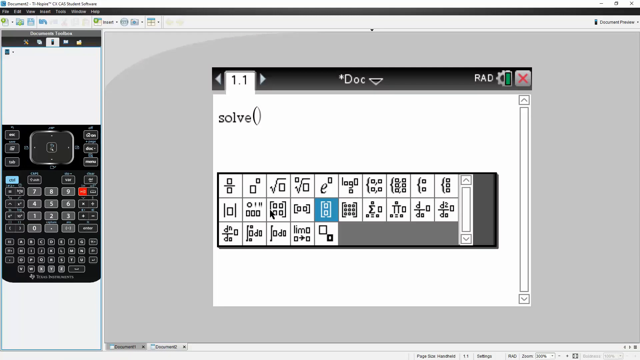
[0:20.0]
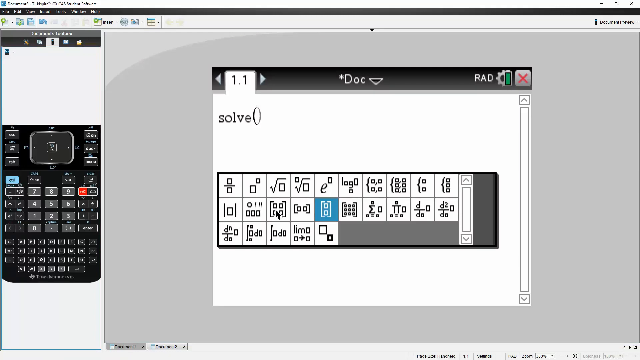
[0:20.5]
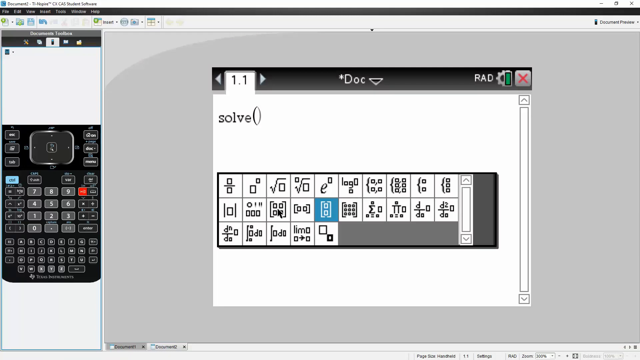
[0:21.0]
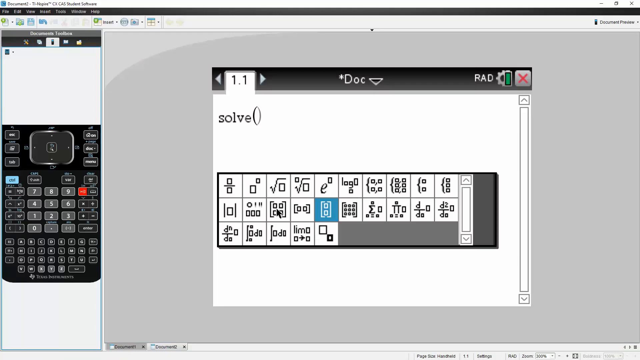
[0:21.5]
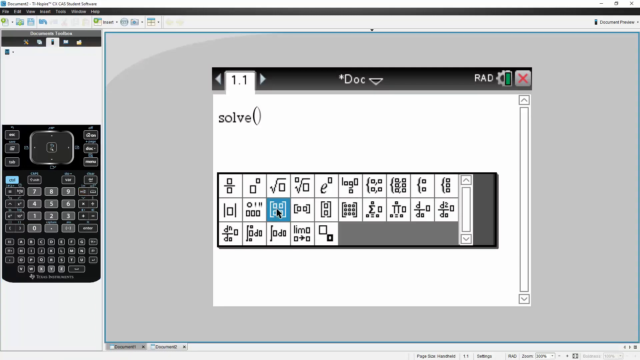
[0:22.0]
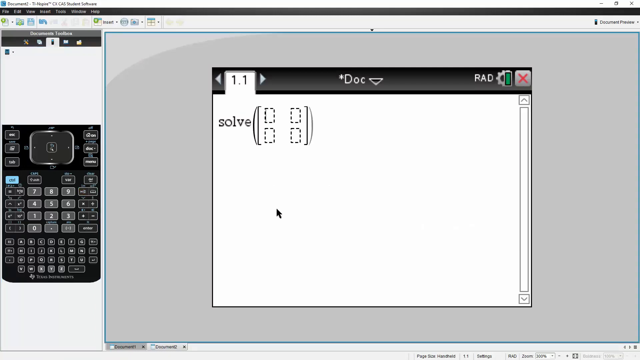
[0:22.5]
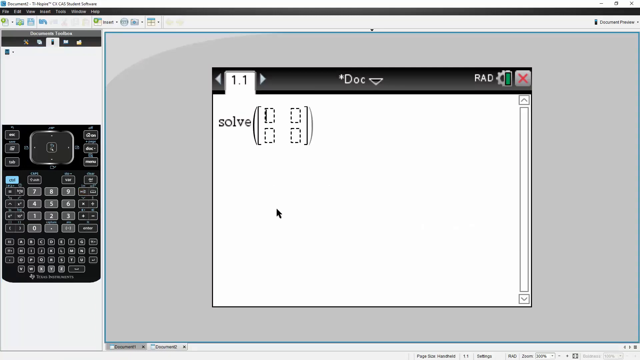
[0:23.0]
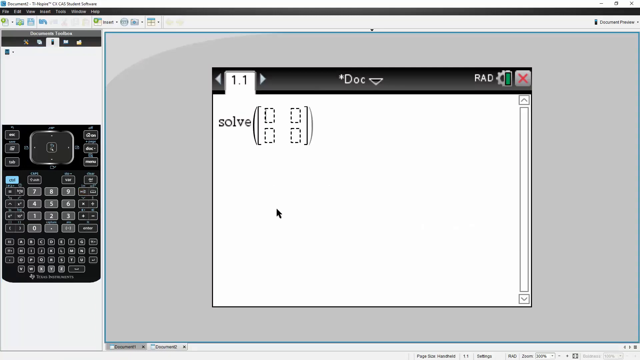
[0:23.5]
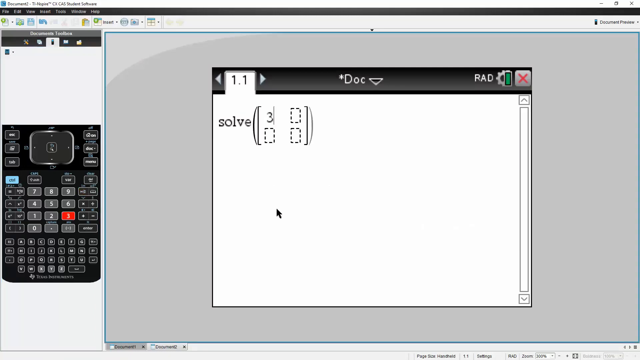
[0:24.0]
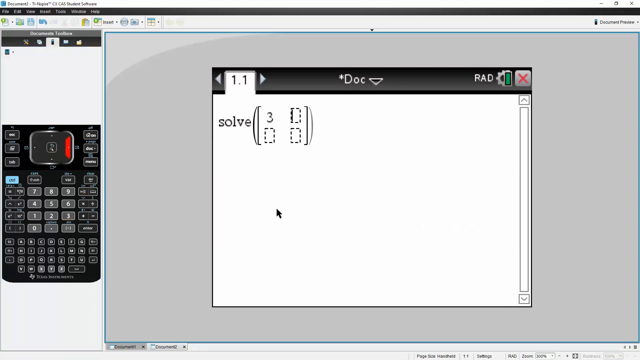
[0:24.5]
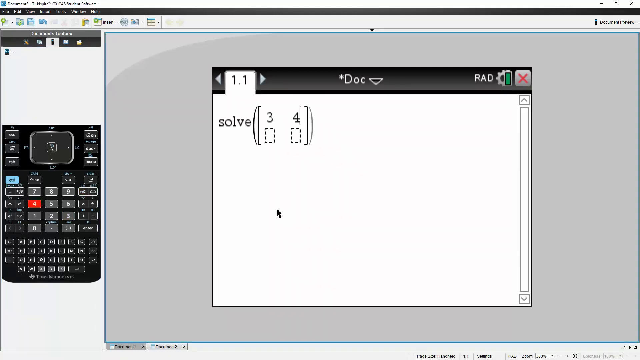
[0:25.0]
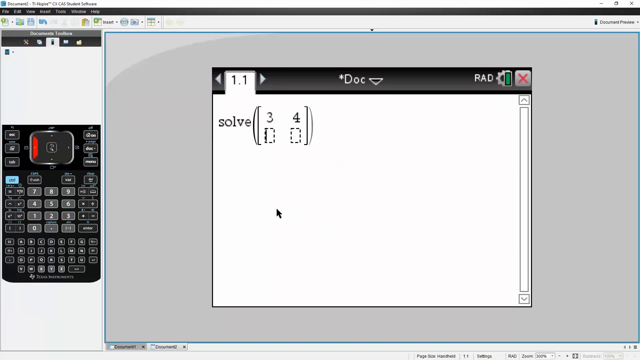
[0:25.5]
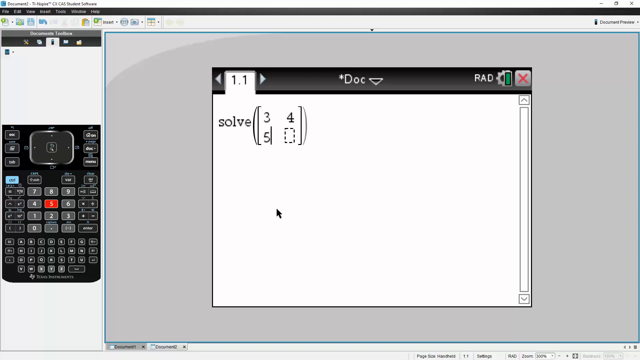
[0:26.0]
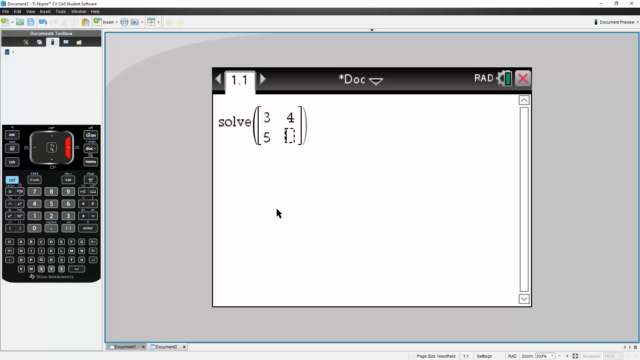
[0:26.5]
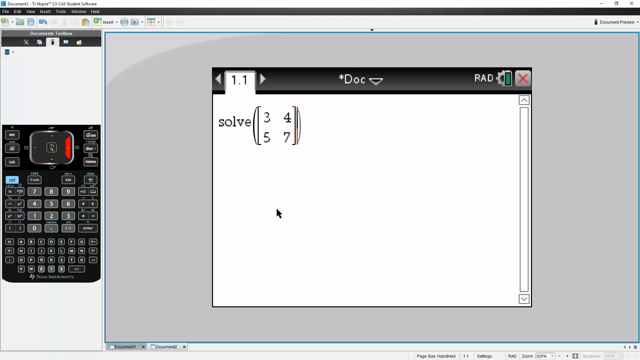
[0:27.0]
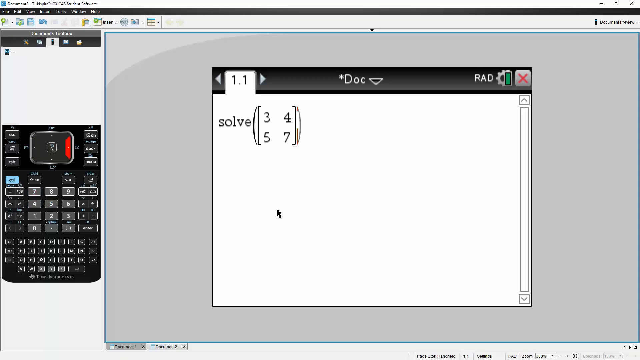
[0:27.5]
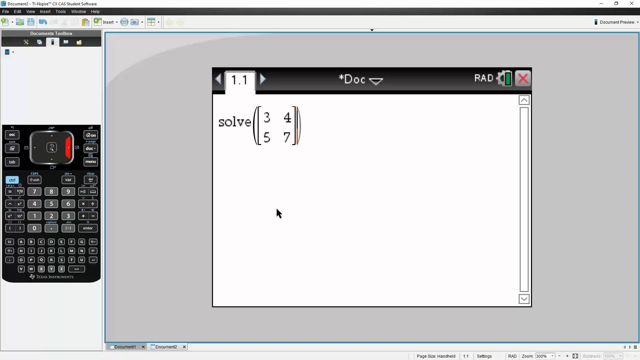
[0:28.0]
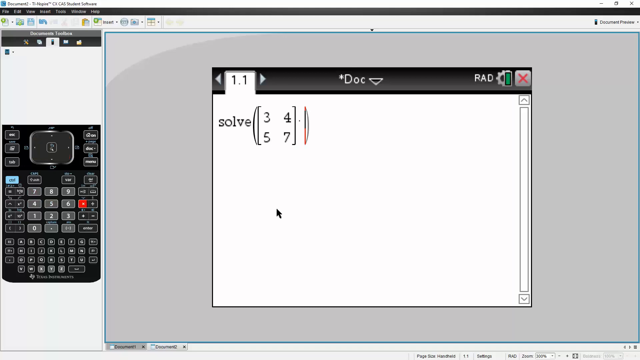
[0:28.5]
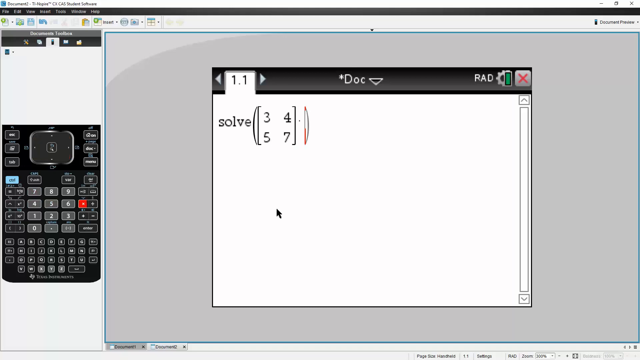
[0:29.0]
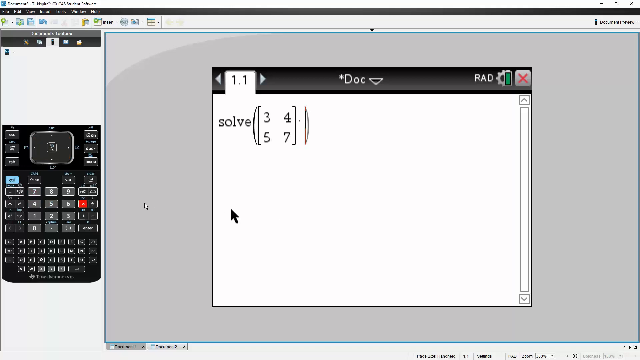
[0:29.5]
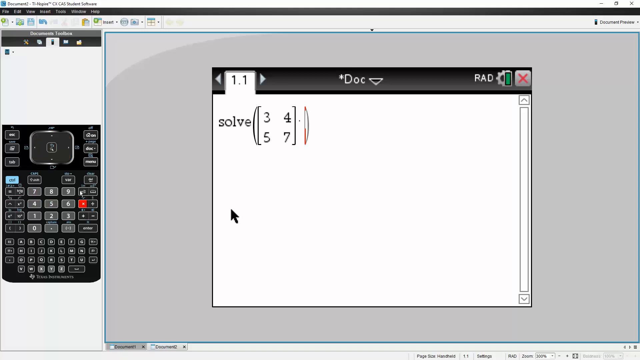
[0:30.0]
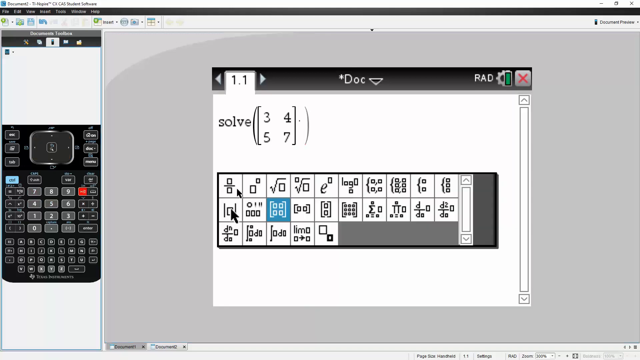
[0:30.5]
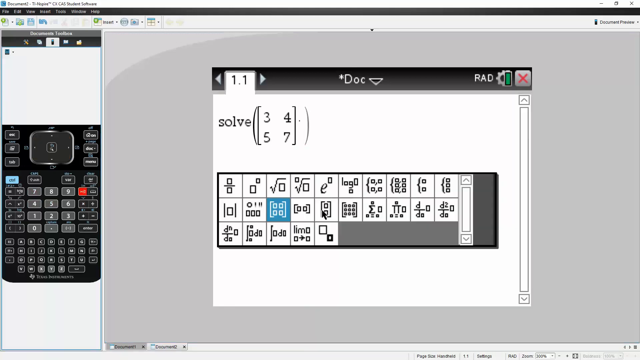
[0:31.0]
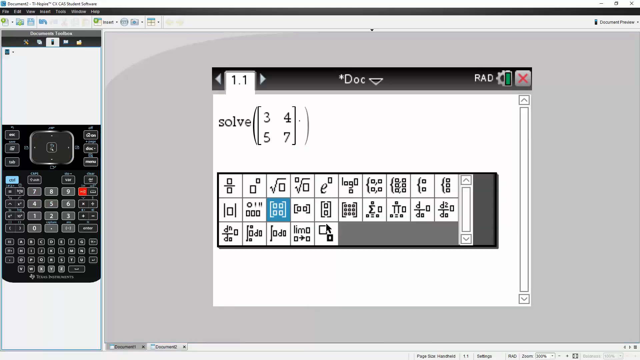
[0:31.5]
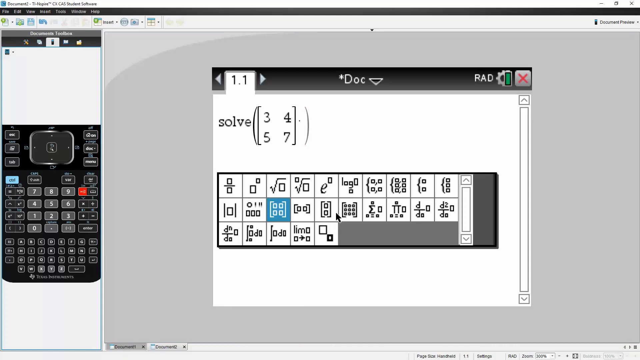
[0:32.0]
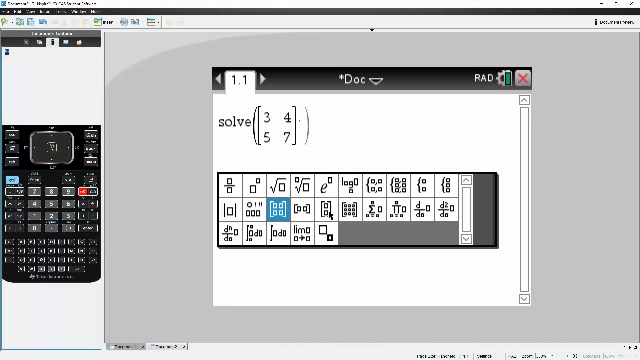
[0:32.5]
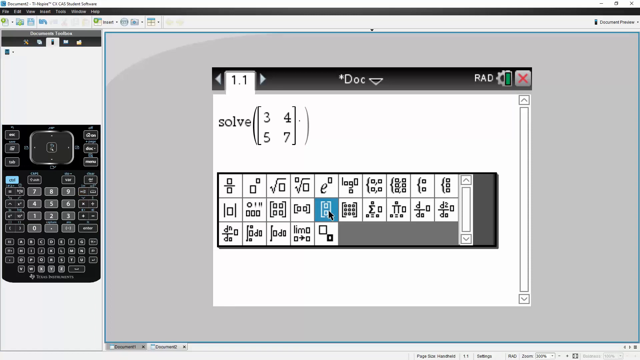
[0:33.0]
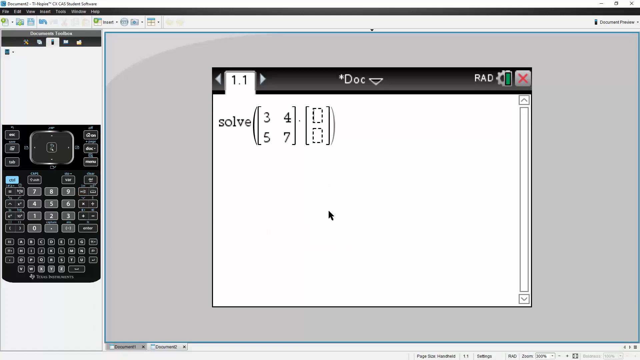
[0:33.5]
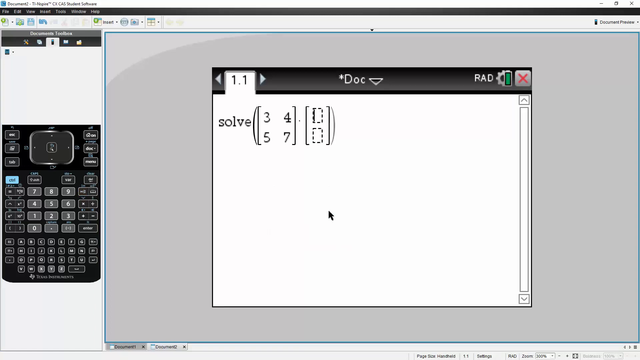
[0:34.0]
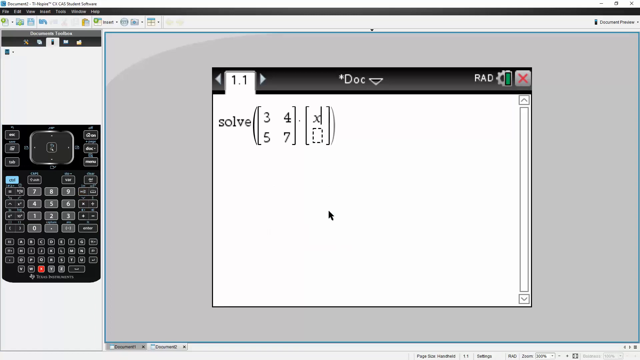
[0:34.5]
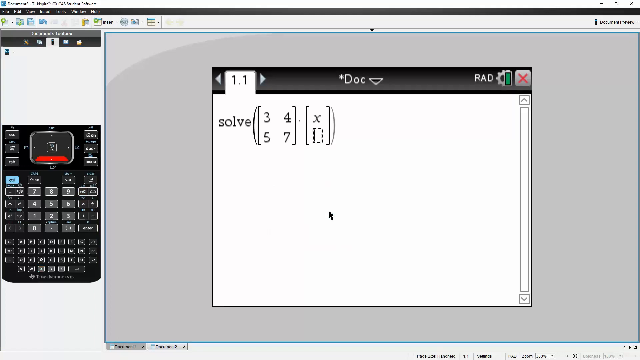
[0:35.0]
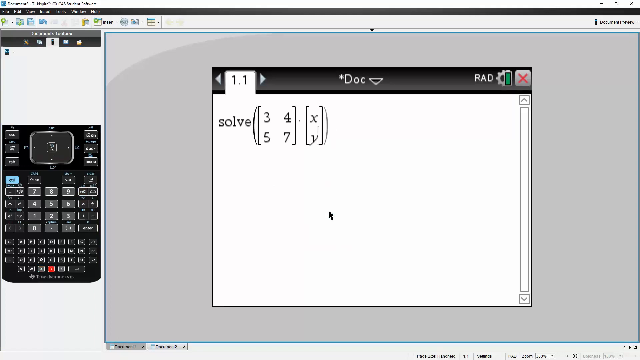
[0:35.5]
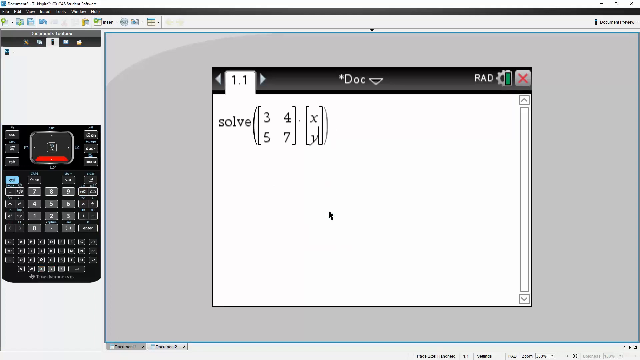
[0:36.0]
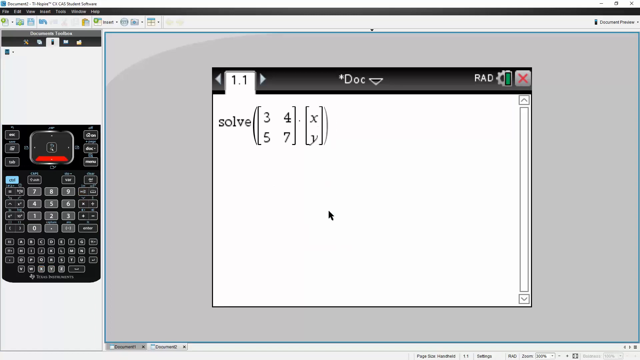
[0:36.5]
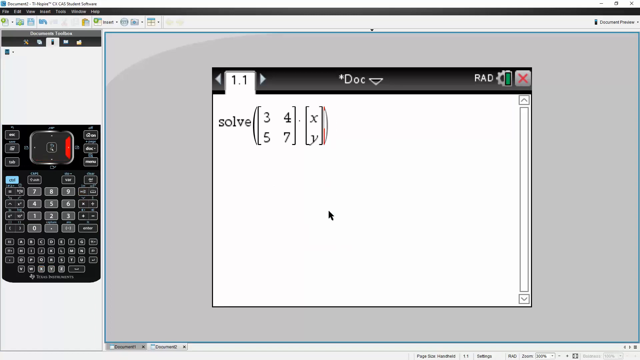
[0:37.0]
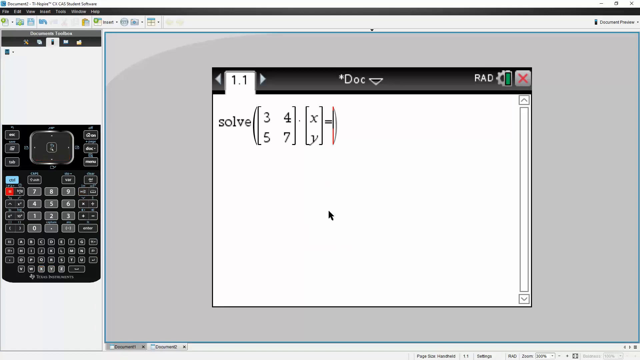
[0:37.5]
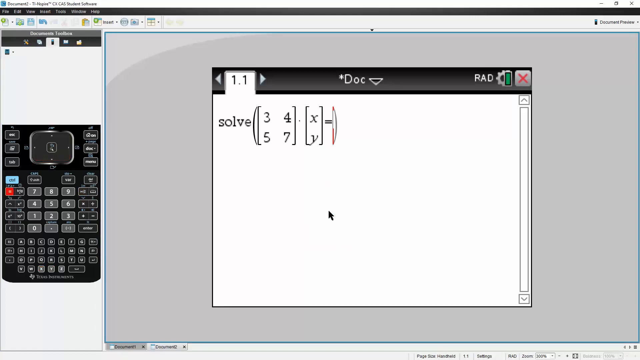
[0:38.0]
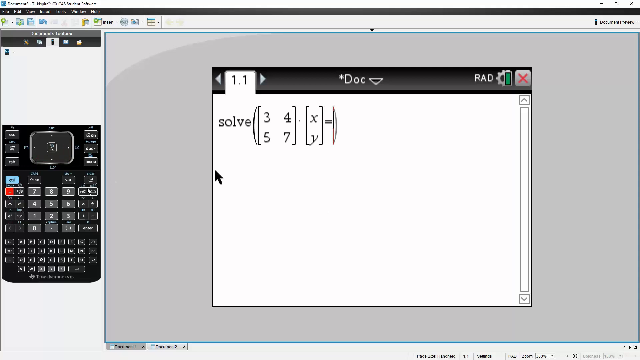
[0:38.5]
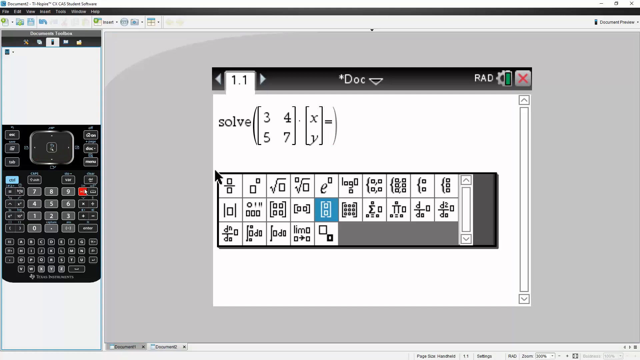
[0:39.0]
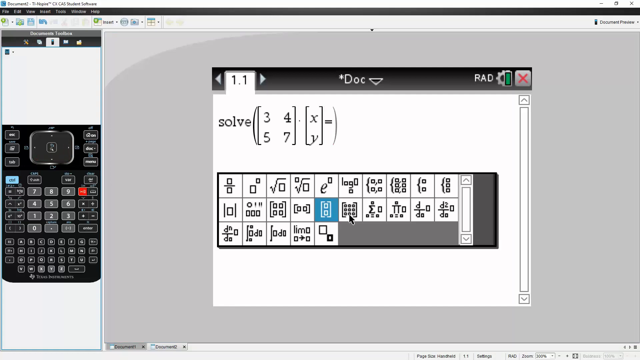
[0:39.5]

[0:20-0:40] On the large central screen, the option to input a matrix is chosen and the numbers are entered. It reads "Solve" followed by brackets and the matrix, with 3 and 4 on top and 5 and 7 below. This screen is a larger version of what is on the calculator. Once the matrix is on the screen, a dot is added as the multiply sign, and another matrix input is used to enter x, y. The matrix question is in the document, and that is what goes into the calculator. The screen can be resized and is currently at 1 to 1. All of the calculator's functions are available, and the chosen format fits the matrix form, with one number above another. A large number of mathematical symbols from the scientific calculator are available to choose from, one of them being solve.